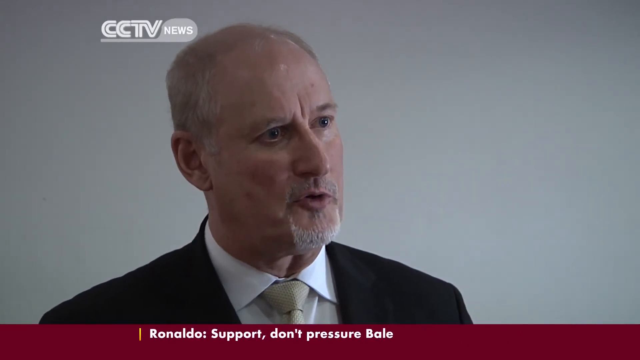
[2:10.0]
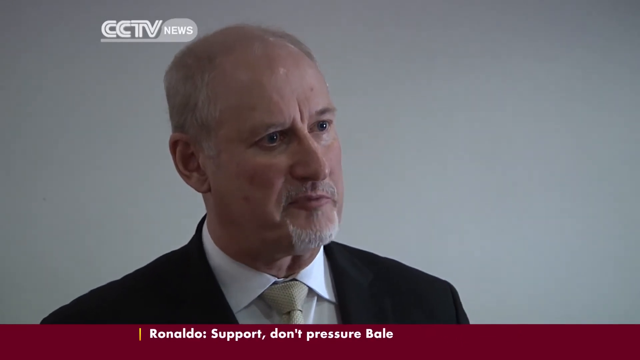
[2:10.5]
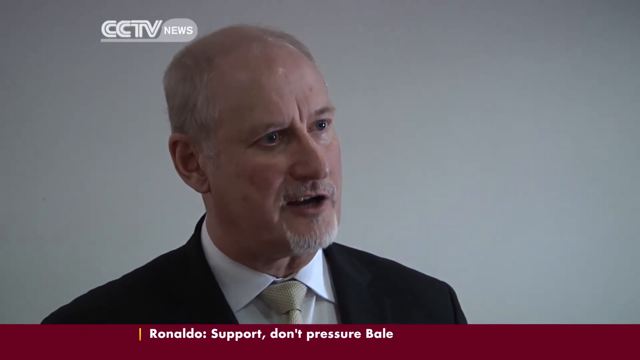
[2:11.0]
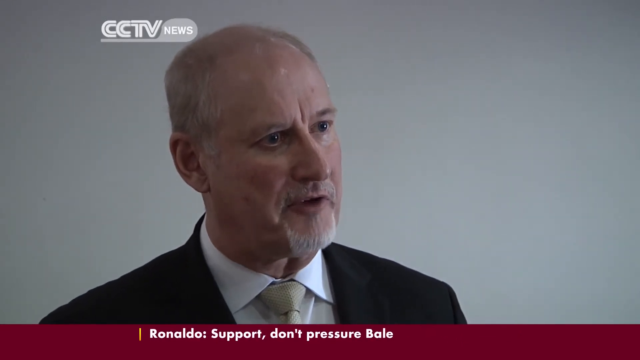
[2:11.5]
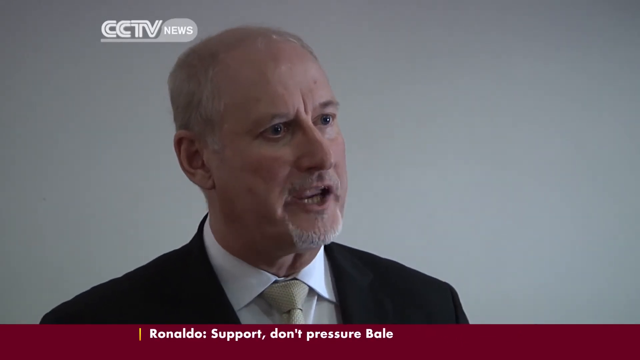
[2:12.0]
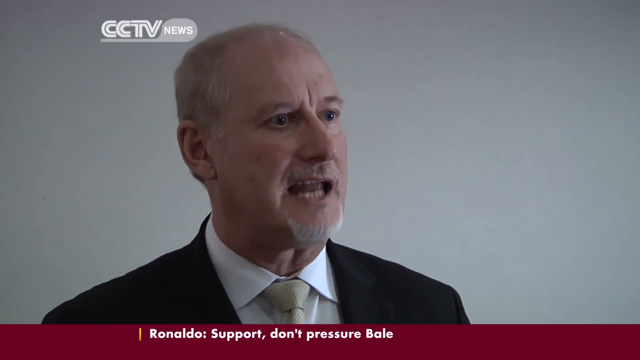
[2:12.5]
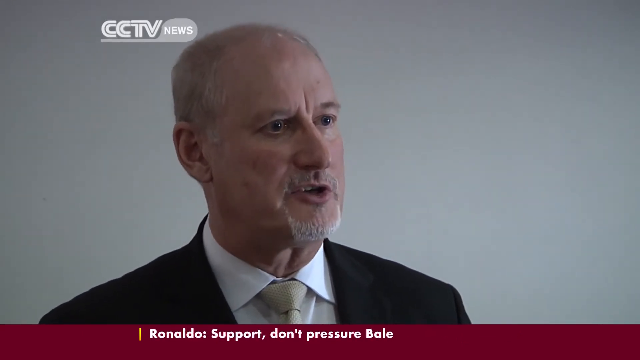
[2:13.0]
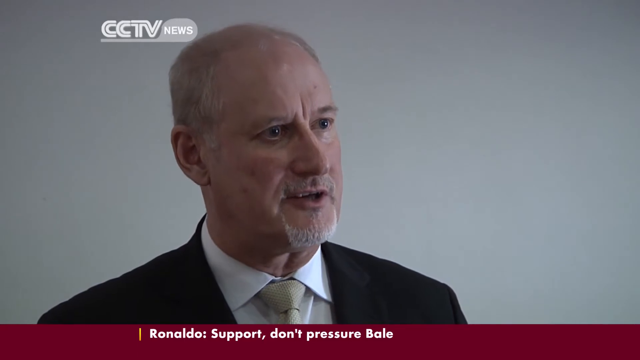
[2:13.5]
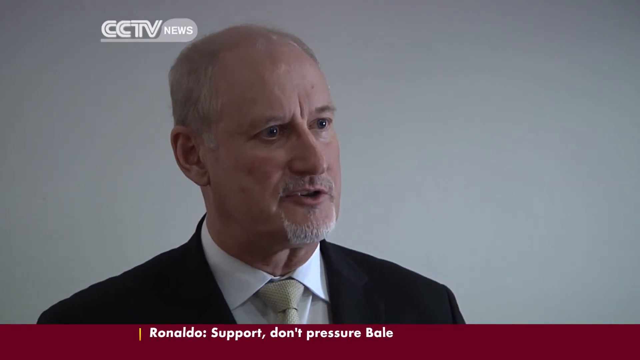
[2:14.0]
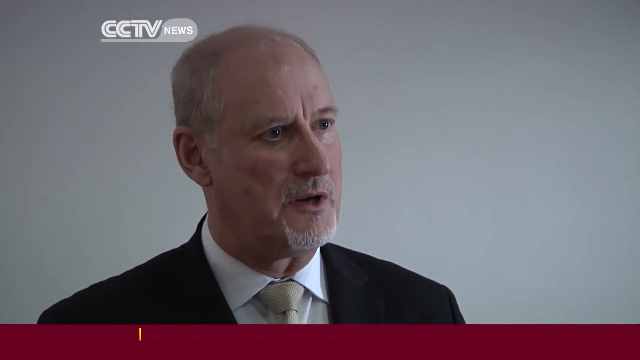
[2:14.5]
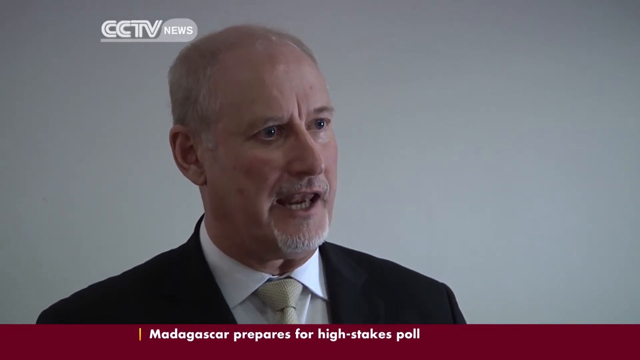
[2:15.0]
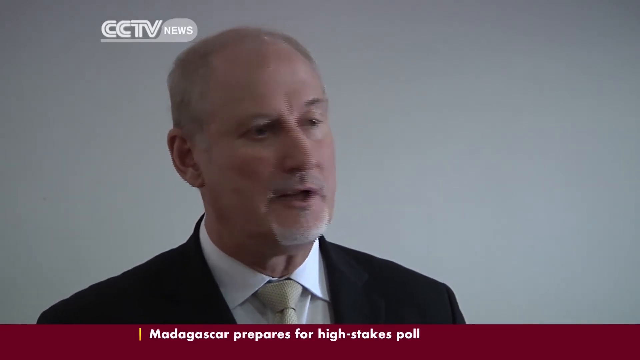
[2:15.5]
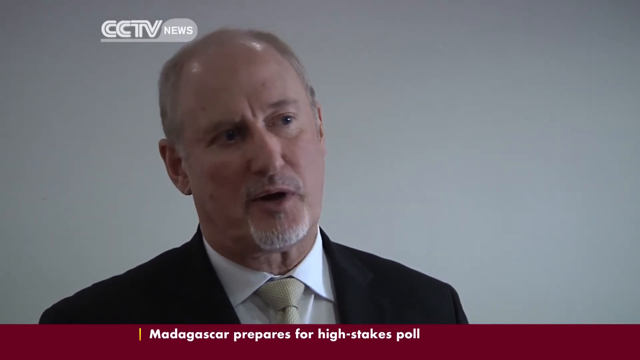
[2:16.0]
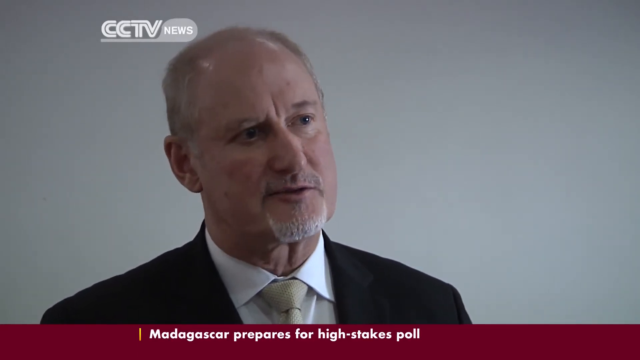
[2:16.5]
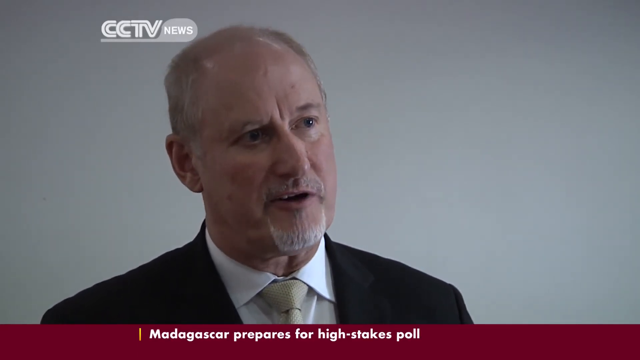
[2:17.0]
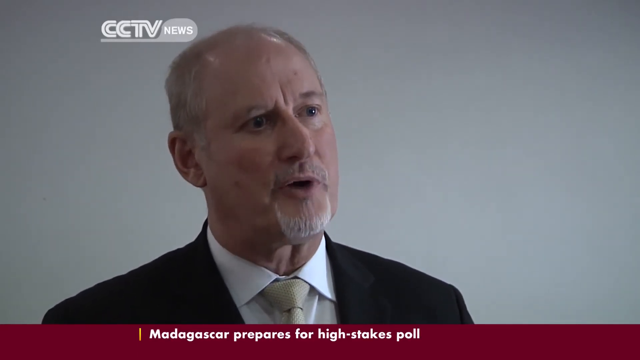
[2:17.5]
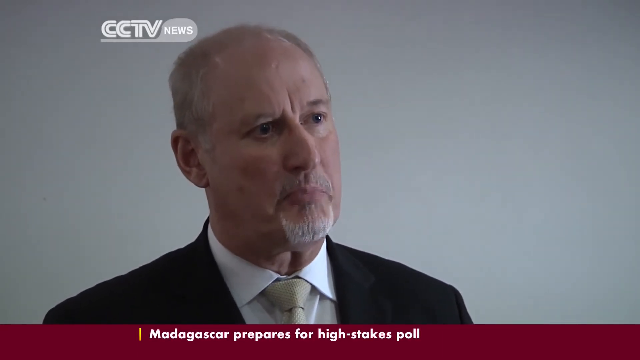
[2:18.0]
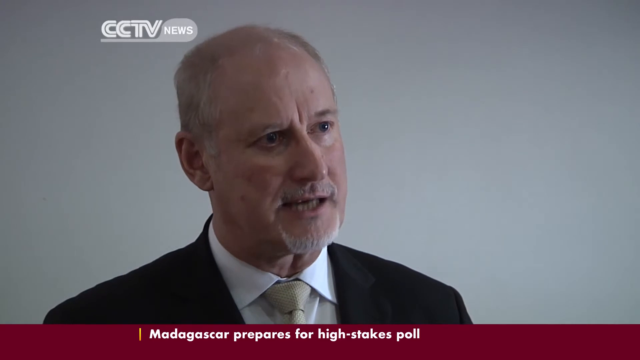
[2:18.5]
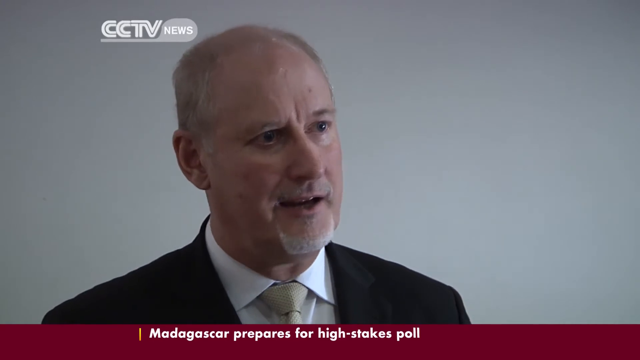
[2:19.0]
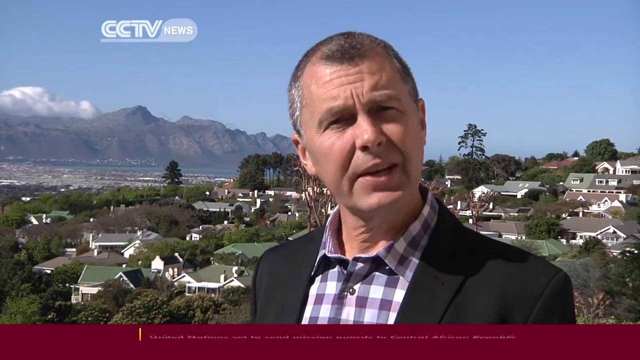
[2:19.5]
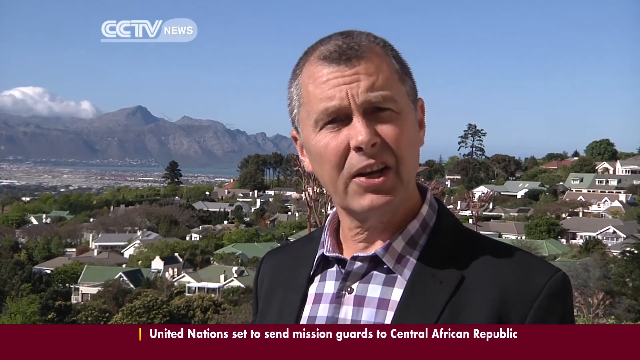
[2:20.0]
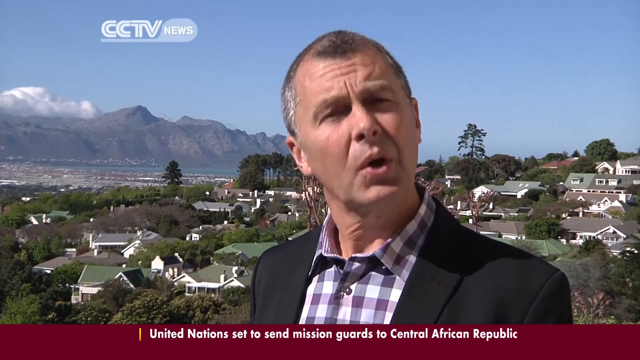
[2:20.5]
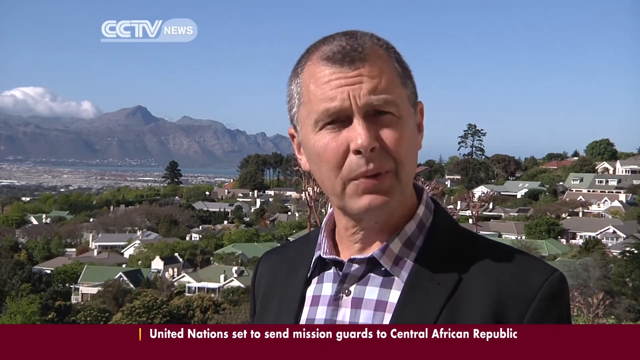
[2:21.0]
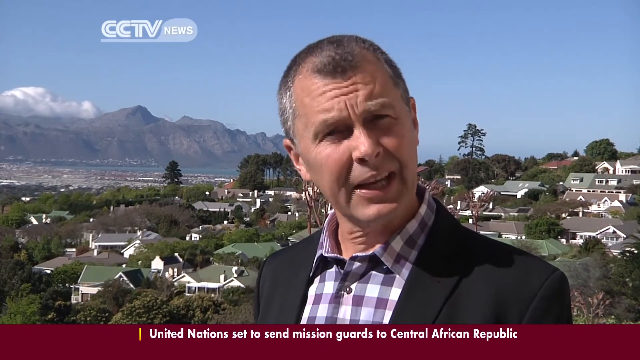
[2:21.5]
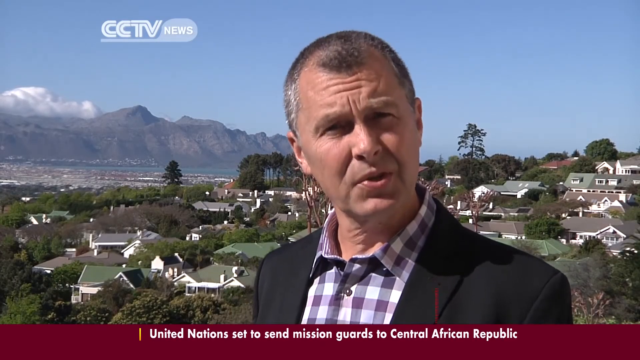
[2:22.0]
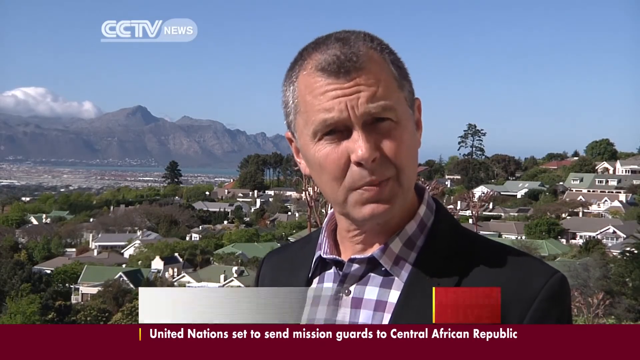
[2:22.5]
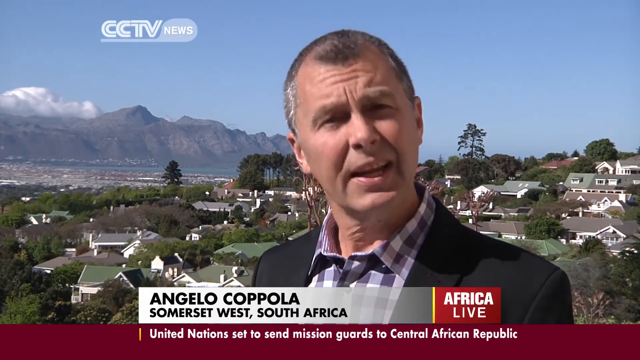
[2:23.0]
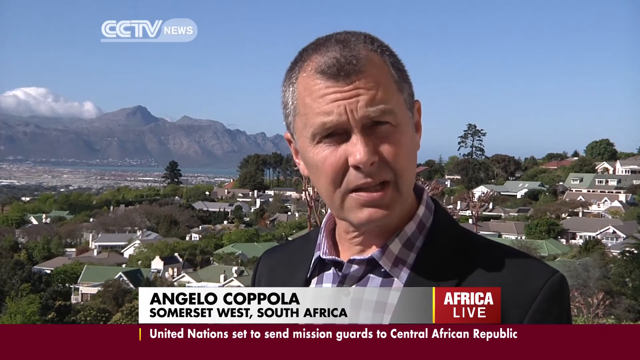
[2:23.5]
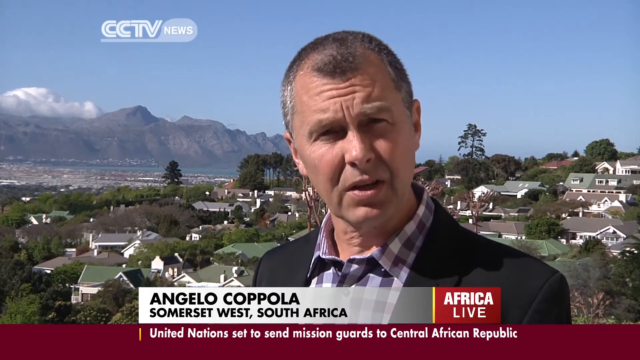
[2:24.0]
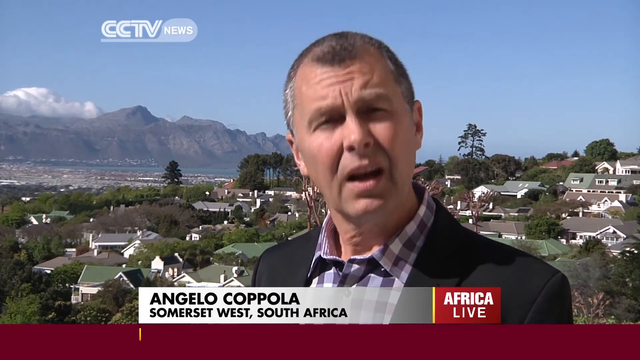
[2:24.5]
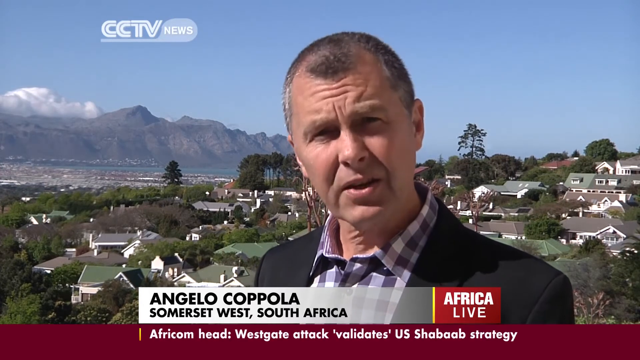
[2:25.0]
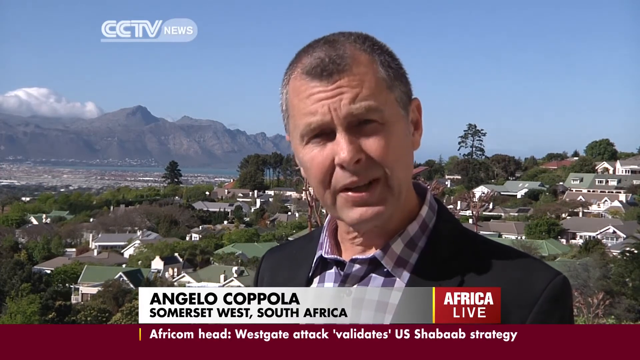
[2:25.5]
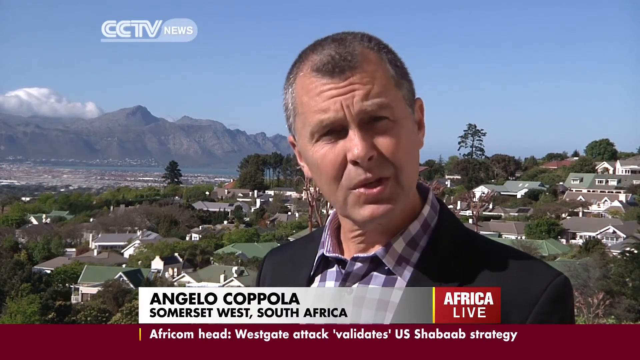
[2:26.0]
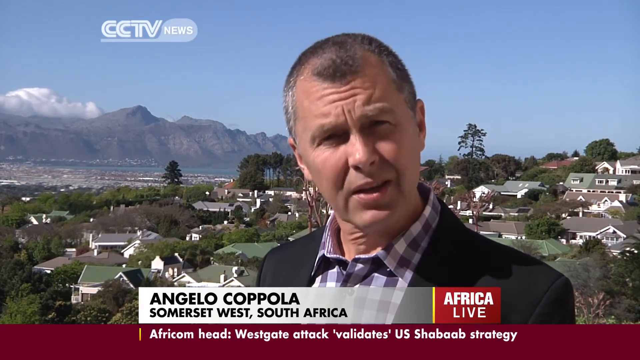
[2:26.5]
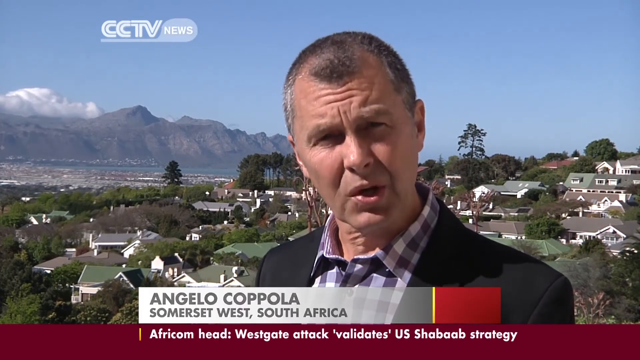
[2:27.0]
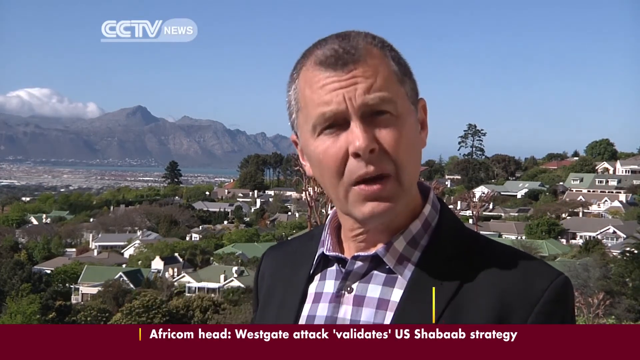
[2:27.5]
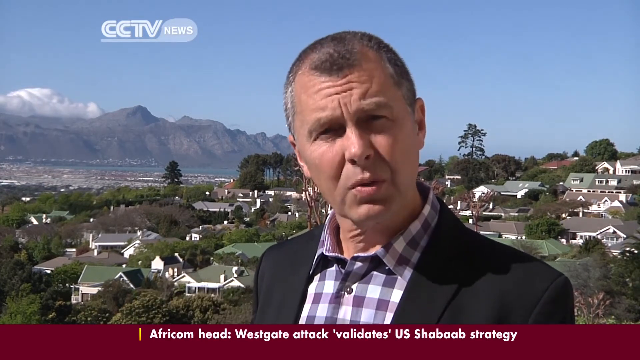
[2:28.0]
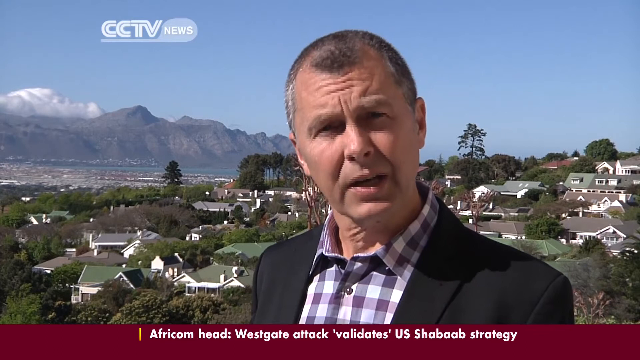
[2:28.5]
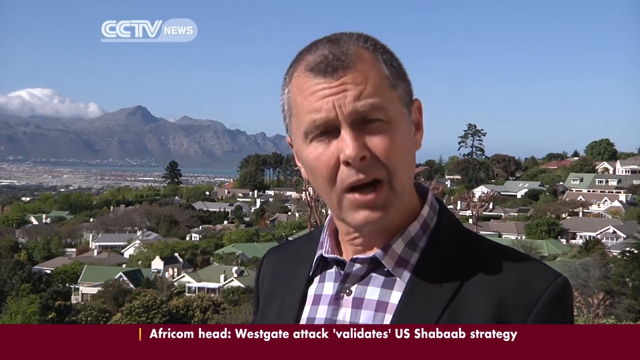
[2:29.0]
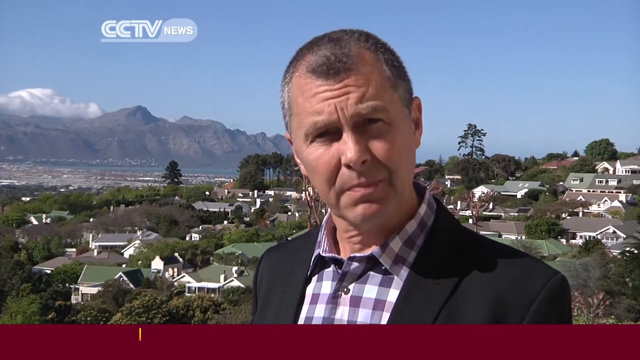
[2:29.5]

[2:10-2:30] The man from Boeing speaks, dressed the same as before: a white button-down shirt, a gray tie, and a suit coat that looks black. He is not happy; from his eyes and demeanor he seems to be holding back real anger, and he looks like he is defending something. Next comes Angelo Coppola in Somerset West, South Africa, broadcasting live for CCTV News. He is standing on what looks like a hill, and below him are houses crammed right up against each other. He talks, and then the video goes back to the Boeing man.